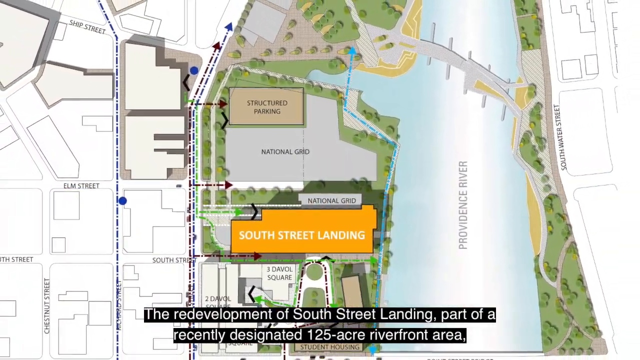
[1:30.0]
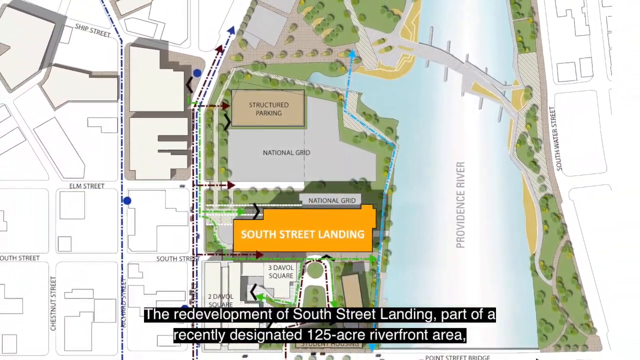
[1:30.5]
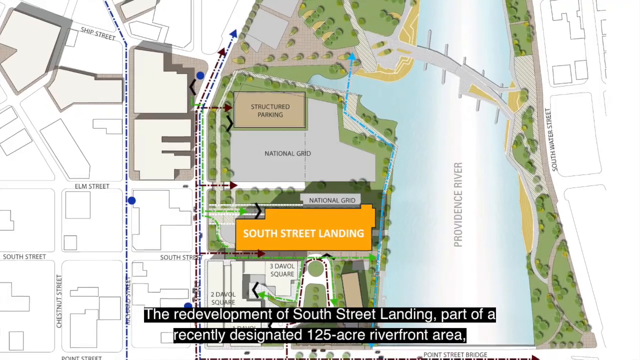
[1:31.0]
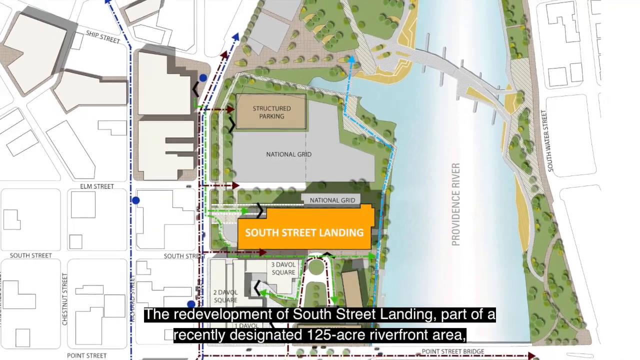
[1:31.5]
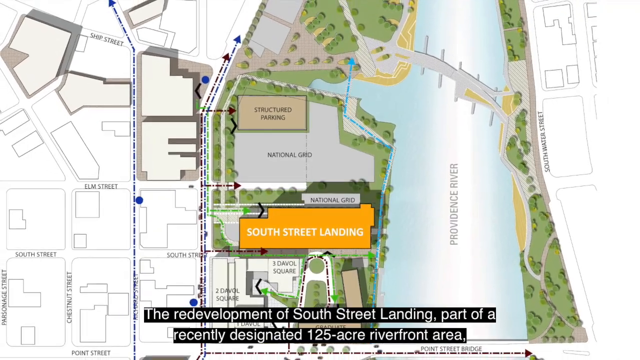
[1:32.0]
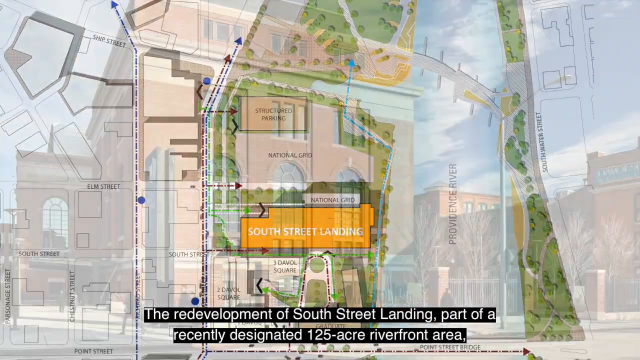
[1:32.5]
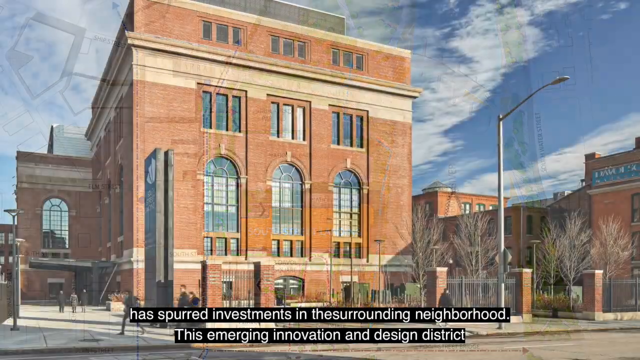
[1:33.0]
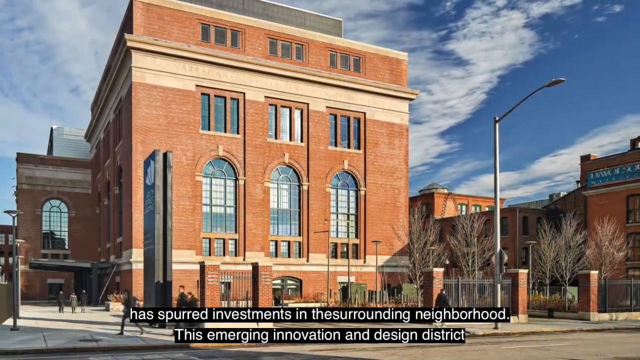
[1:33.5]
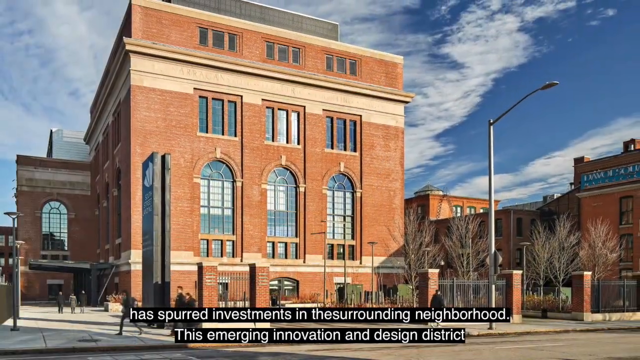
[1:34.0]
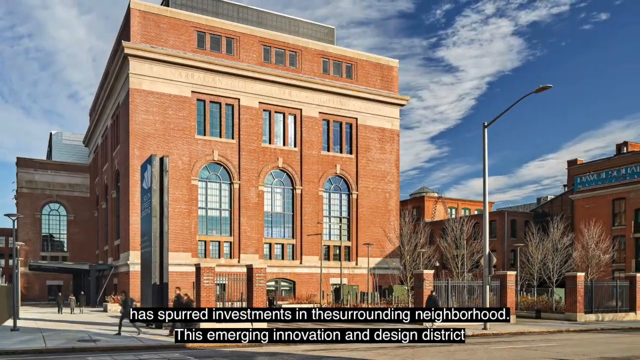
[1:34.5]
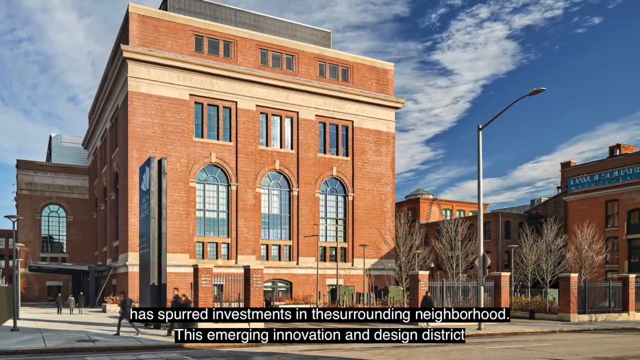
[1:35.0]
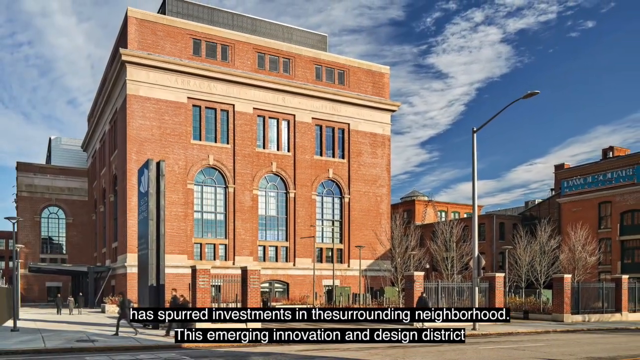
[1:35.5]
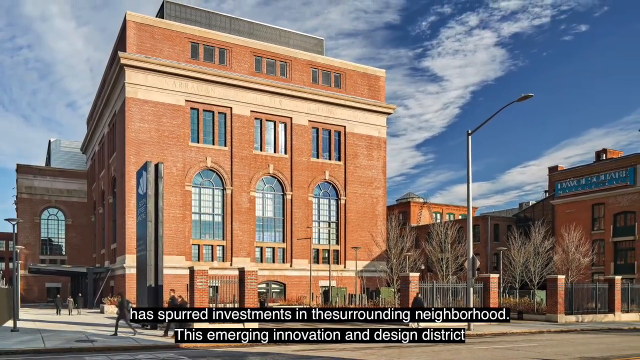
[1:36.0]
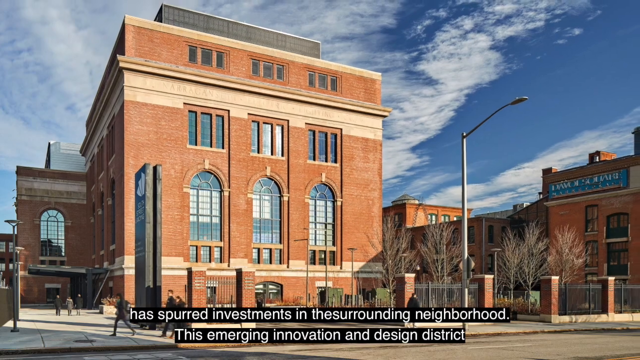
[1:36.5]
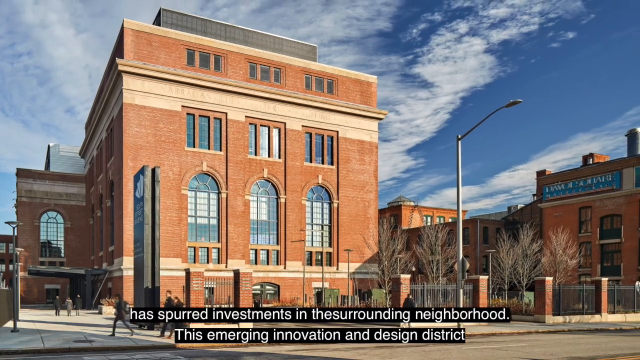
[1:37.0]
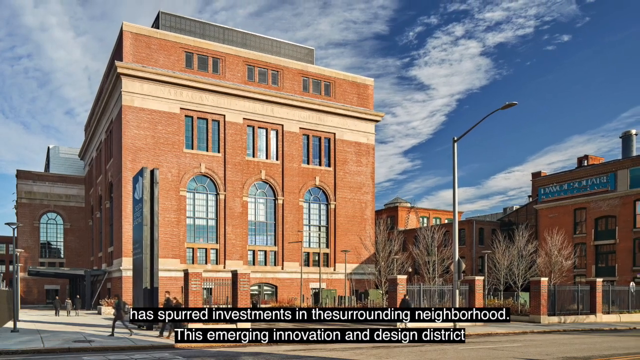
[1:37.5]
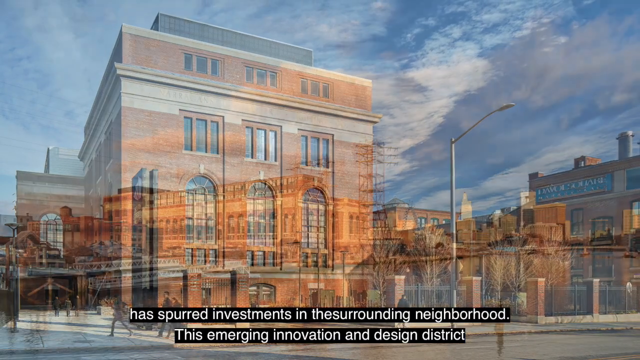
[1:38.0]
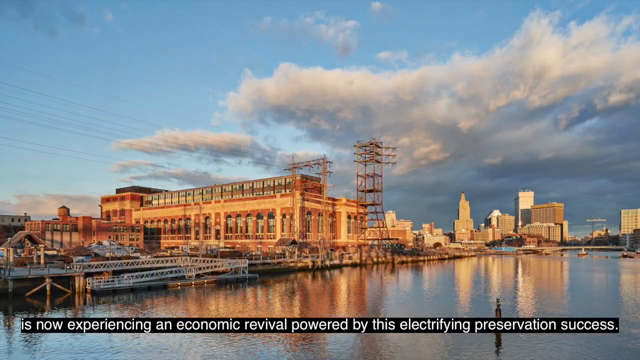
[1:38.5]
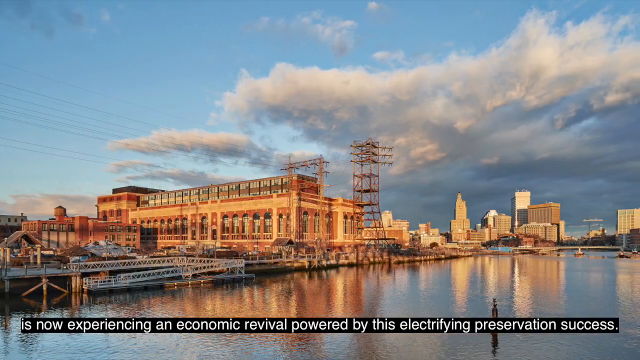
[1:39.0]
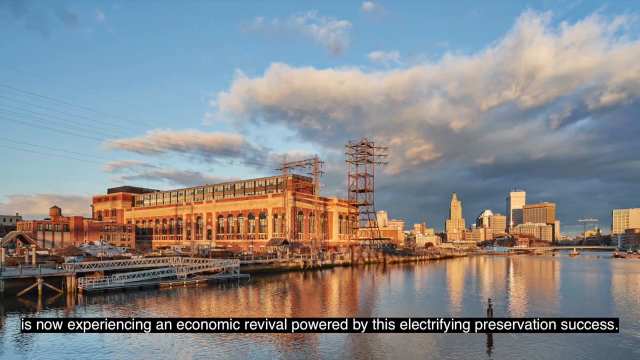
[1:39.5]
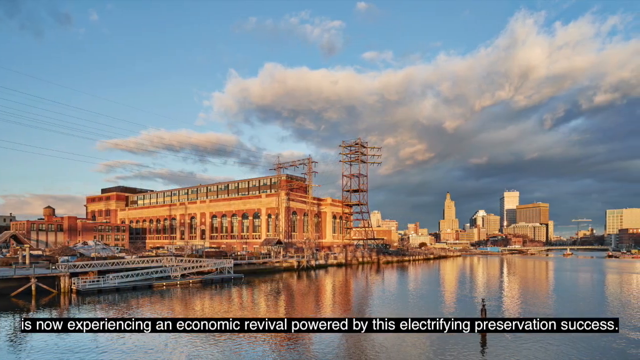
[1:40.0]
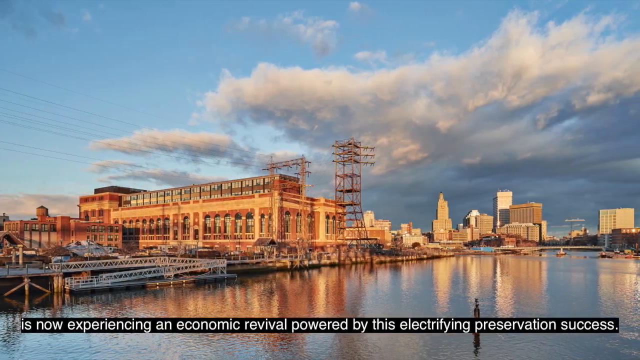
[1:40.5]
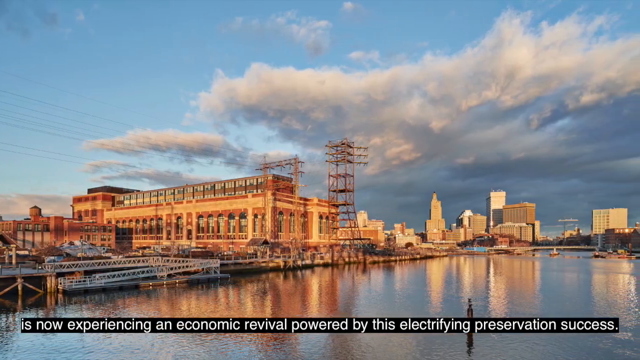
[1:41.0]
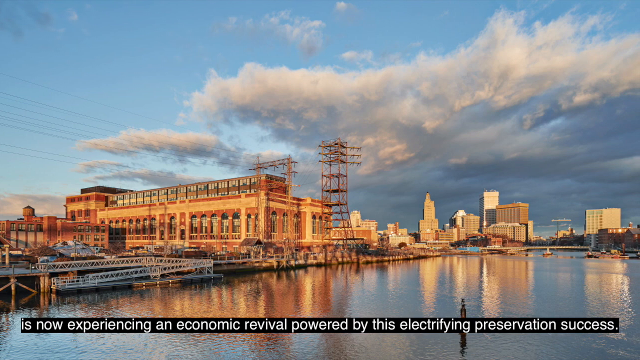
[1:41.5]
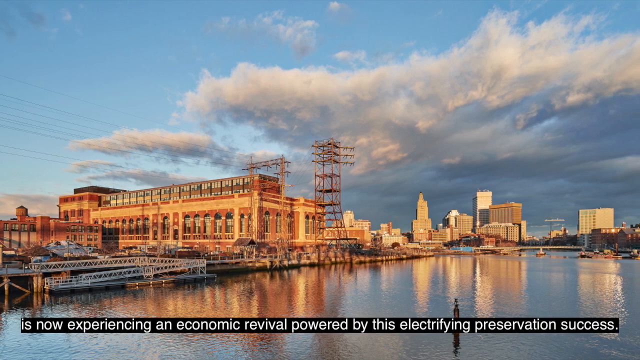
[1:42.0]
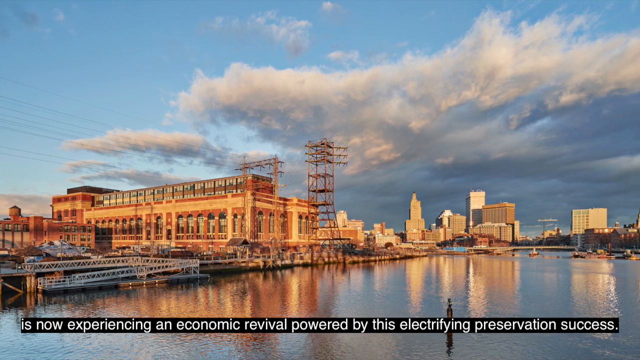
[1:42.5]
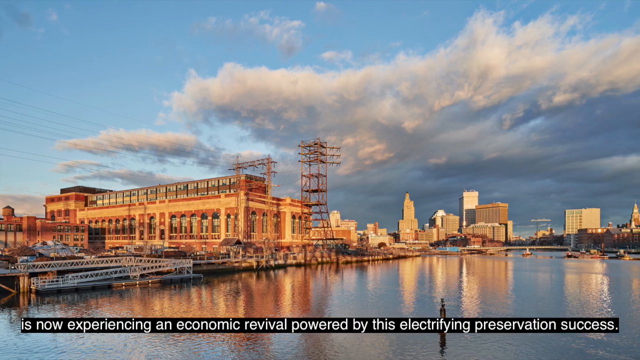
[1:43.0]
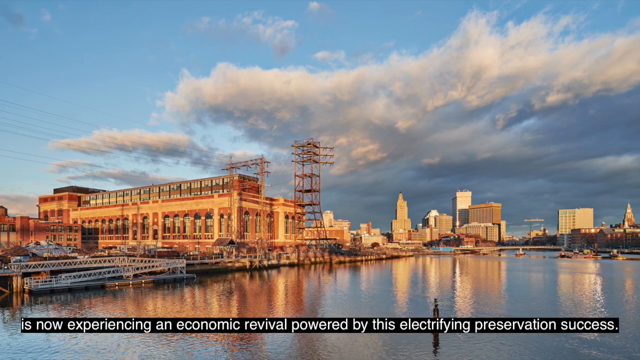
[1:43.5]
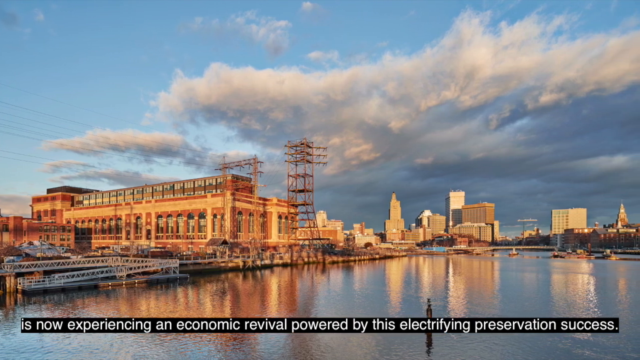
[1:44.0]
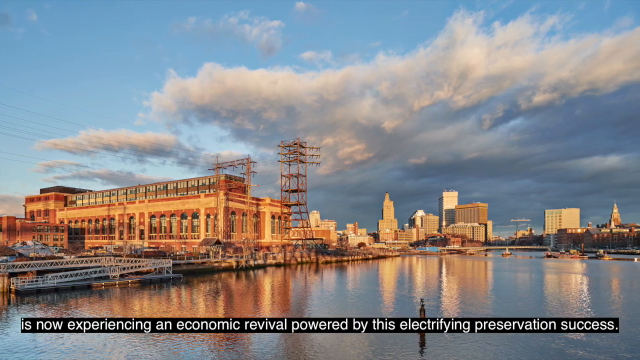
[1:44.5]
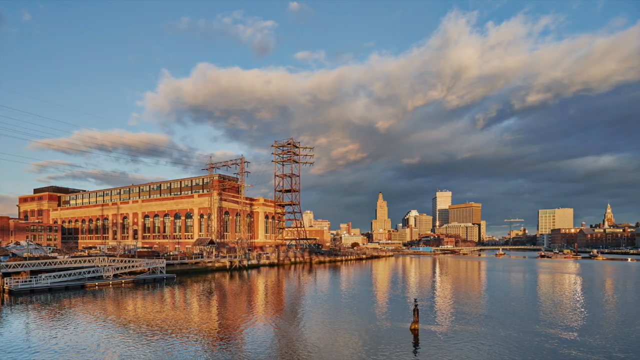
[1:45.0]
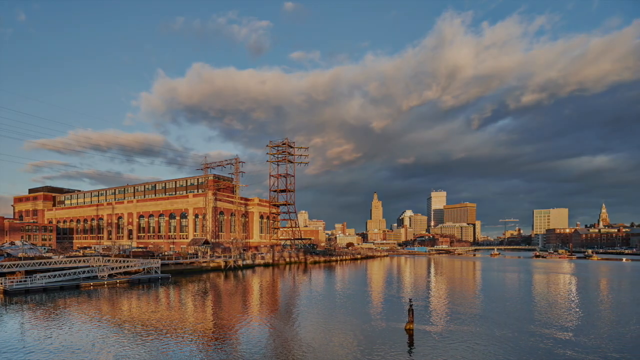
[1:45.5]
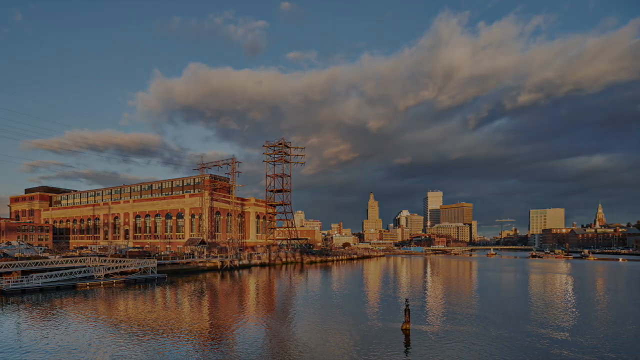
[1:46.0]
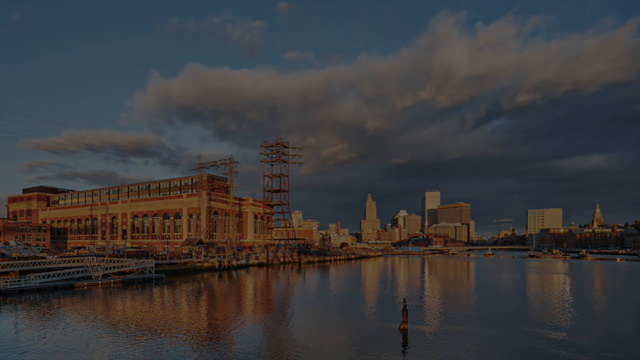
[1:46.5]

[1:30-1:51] The map of the South Street Landing area is shown. The next image is the side of the building, which is fairly large and square-shaped, with some more buildings in the background. The following image shows the building from the opposite side of the river. The sky above is half blue and half cloudy, with the clouds on the right-hand side. The building is a brown brick color with some yellowish-orange accents running through it on the outside. Text below reads "is now experiencing an economic revival powered by this electrifying preservation success." The camera slowly rotates to the right, taking in more of the city, before a black closing screen ends the video.